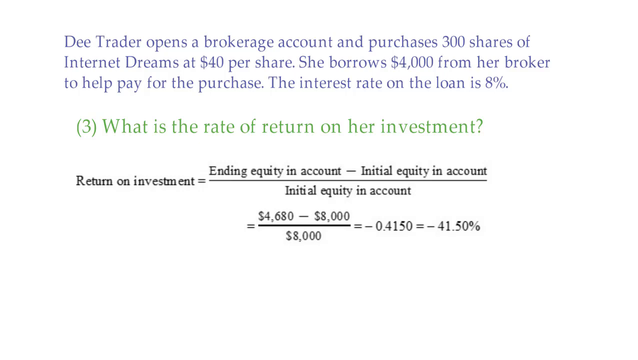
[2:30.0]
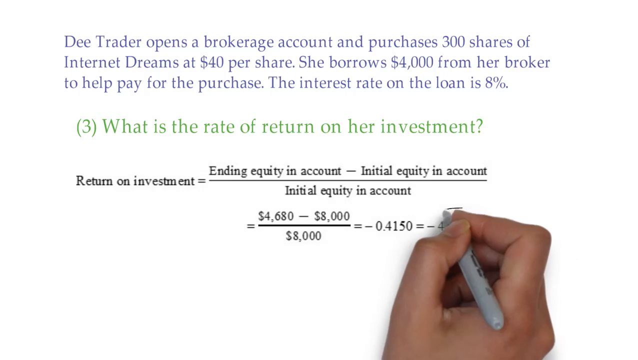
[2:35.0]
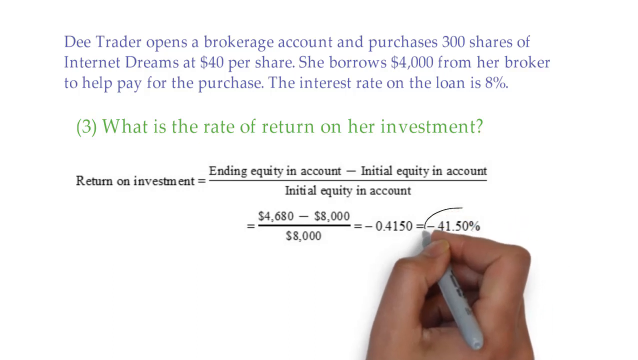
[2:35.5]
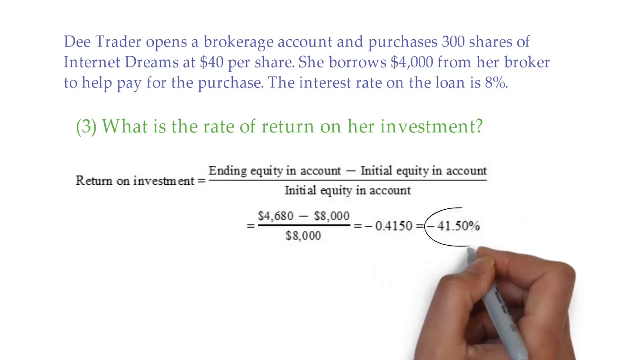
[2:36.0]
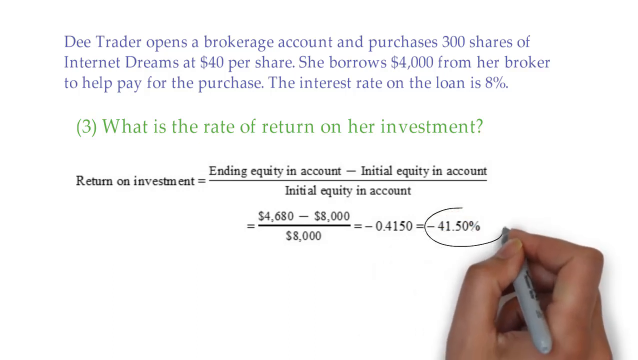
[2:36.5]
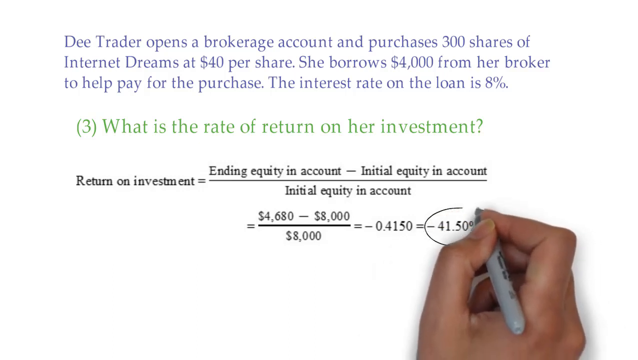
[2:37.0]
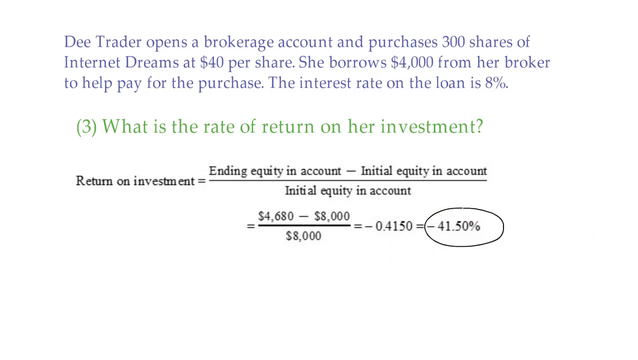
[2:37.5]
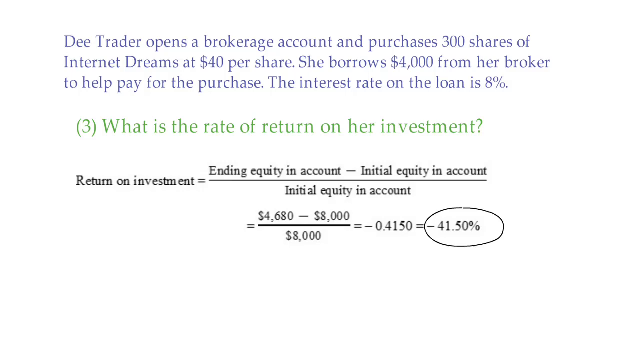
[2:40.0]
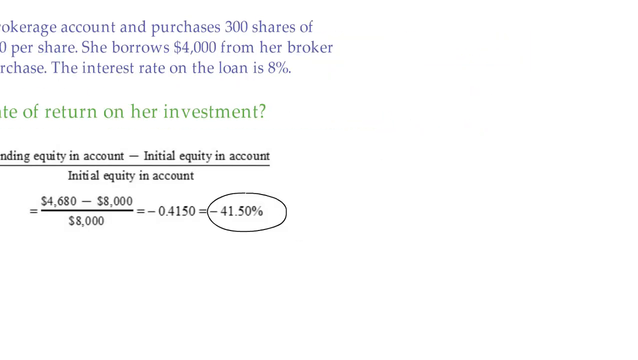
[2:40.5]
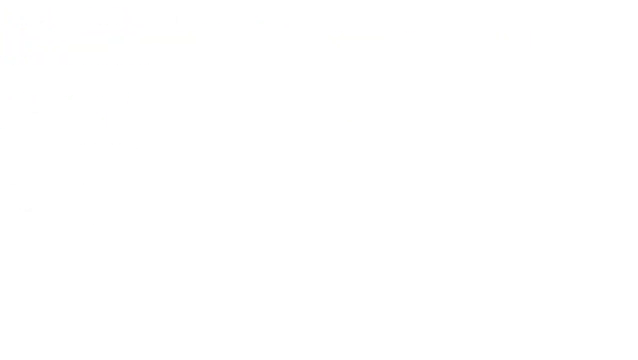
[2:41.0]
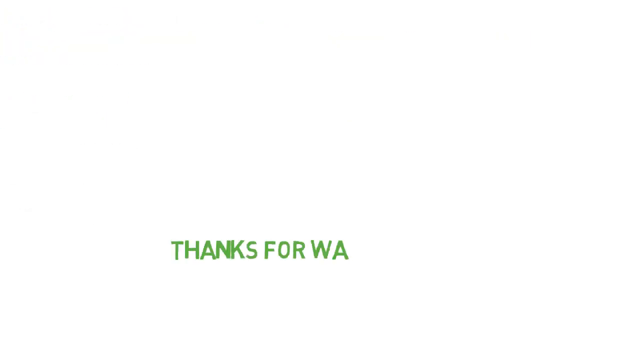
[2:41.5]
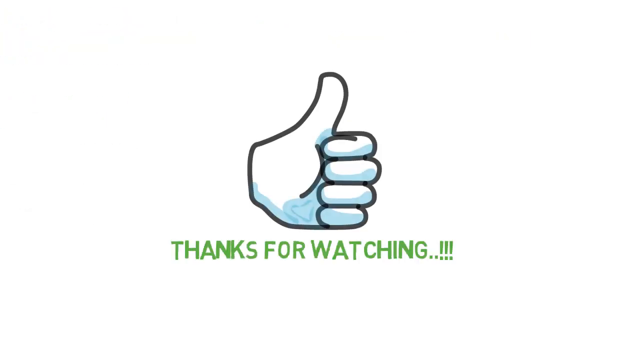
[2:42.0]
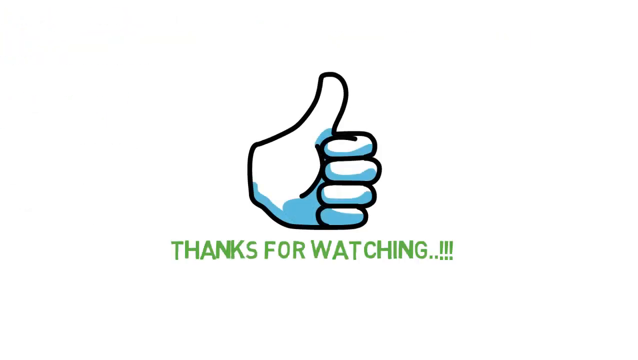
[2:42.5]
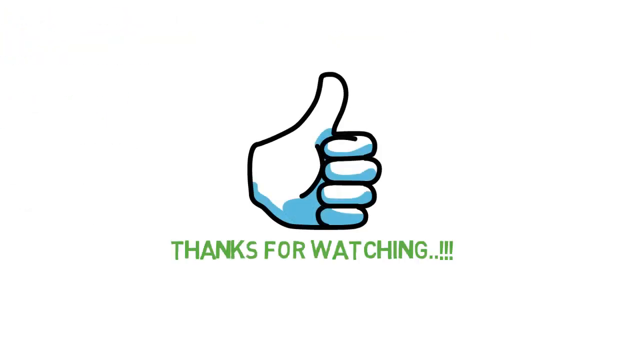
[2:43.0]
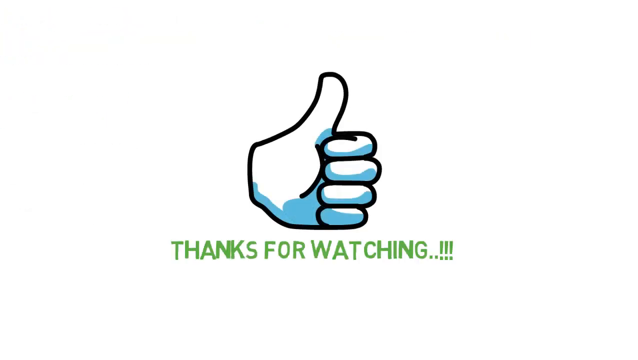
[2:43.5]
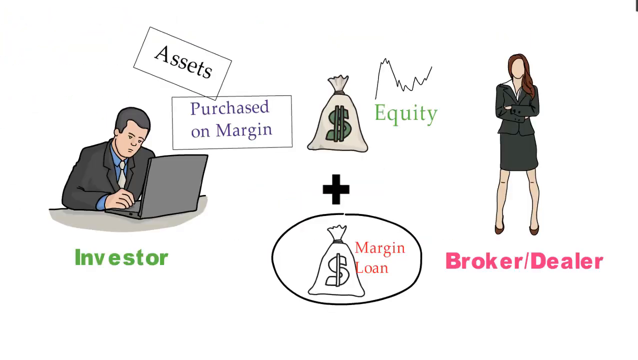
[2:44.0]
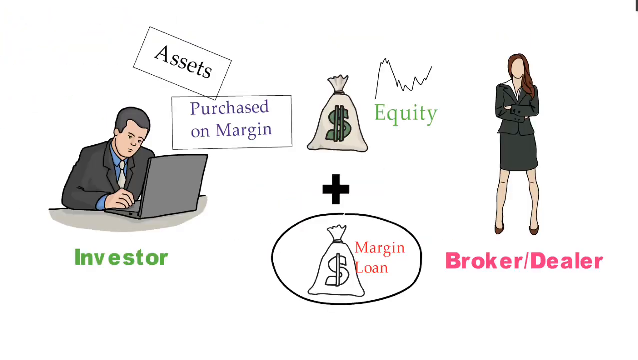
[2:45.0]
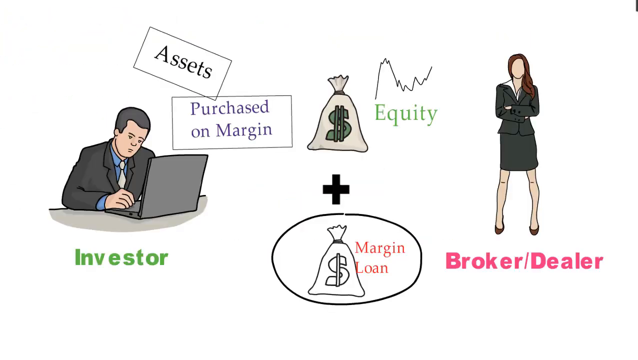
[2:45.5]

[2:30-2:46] The equation is finished with the answer of -41.5%. The Sharpie hand comes up from the bottom again, starts at the top of the -41.5% answer, and draws a circle counterclockwise around it. All of the text then moves off to the left side of the screen, leaving a white screen. After the white screen flashes for a brief second, green text in bold capital letters scrolls across the bottom of the screen: "THANKS FOR WATCHING..!!!". Right above the text is a white hand giving a thumbs up, and the video ends.